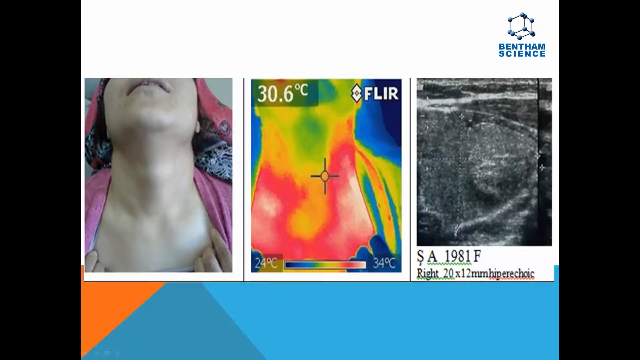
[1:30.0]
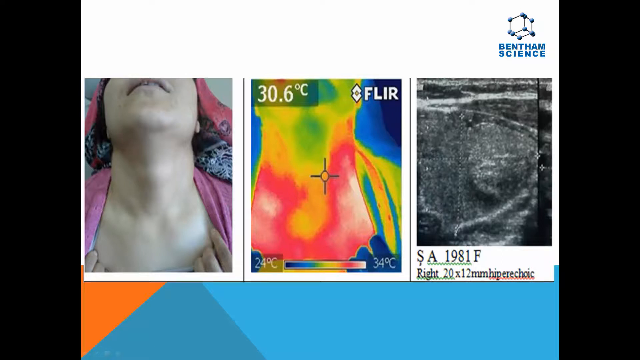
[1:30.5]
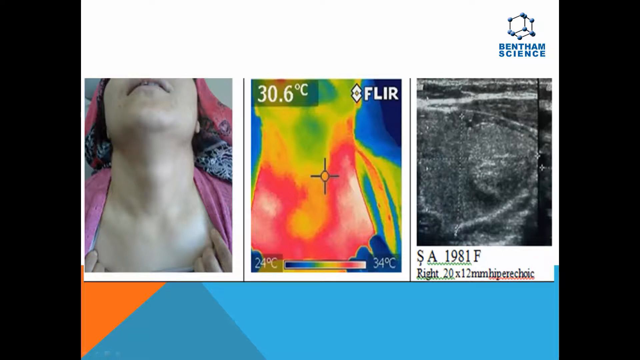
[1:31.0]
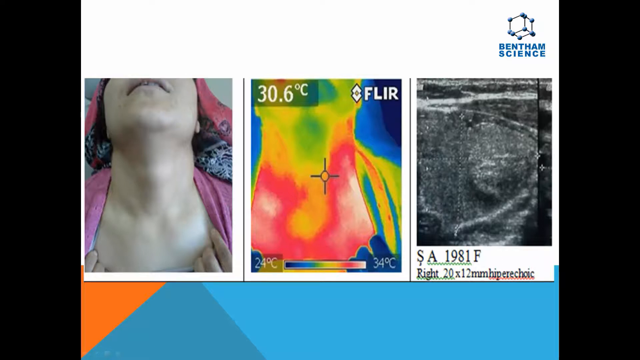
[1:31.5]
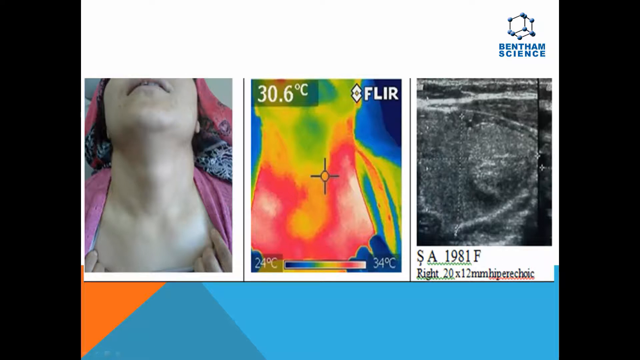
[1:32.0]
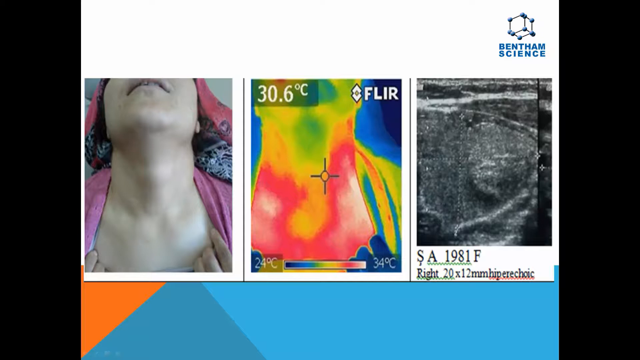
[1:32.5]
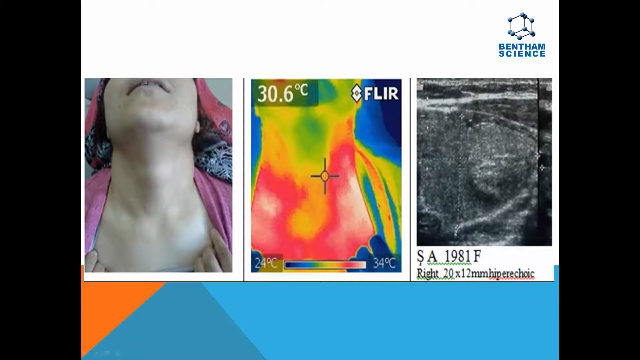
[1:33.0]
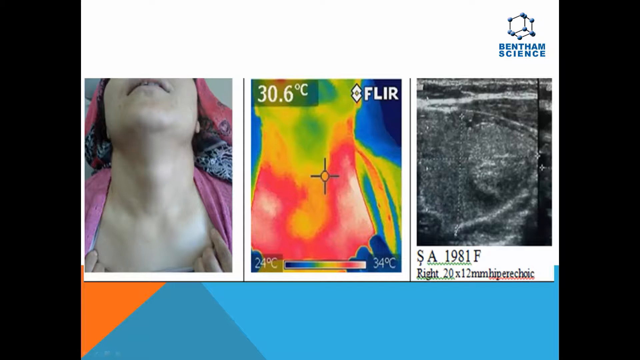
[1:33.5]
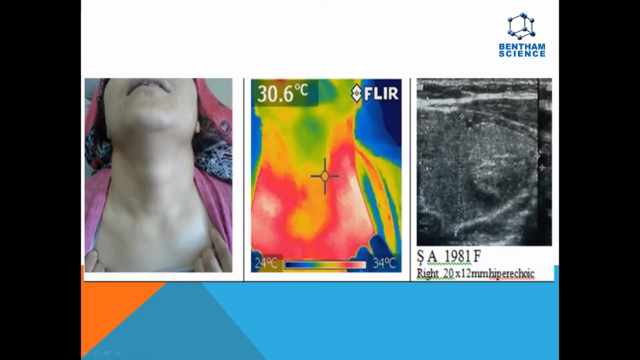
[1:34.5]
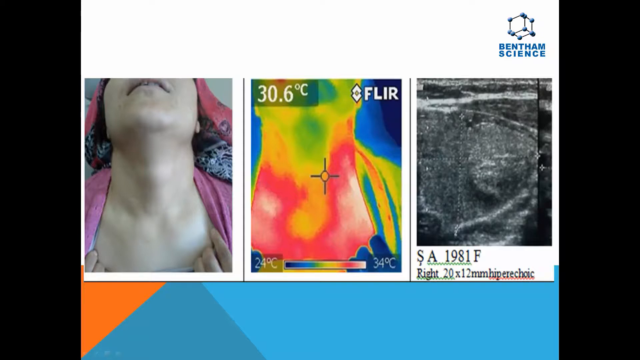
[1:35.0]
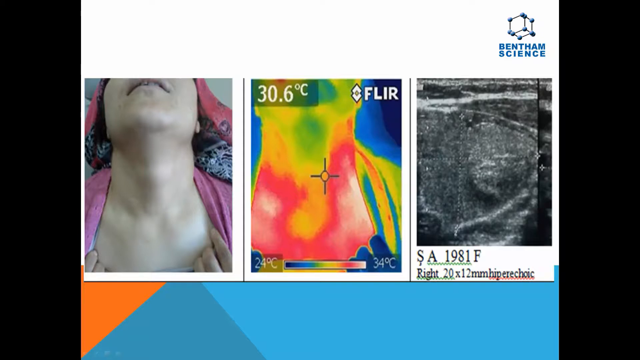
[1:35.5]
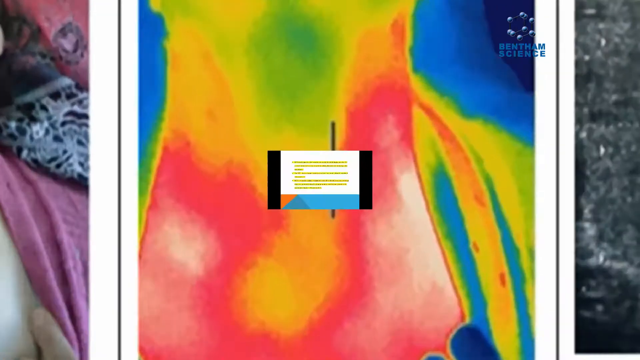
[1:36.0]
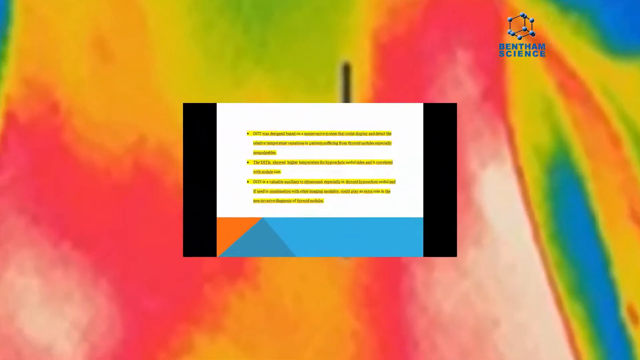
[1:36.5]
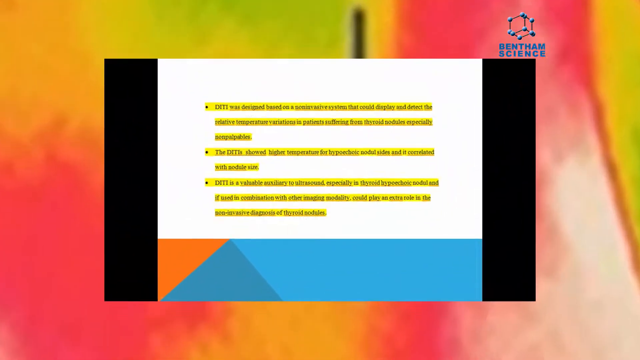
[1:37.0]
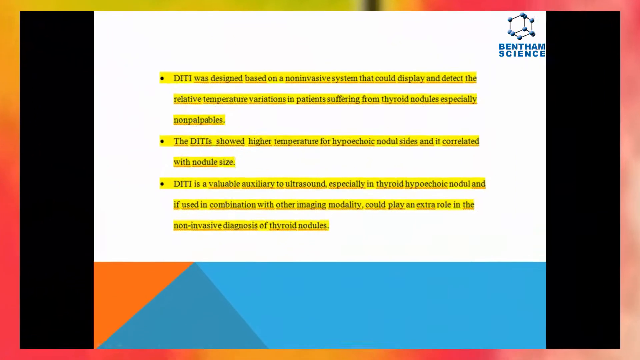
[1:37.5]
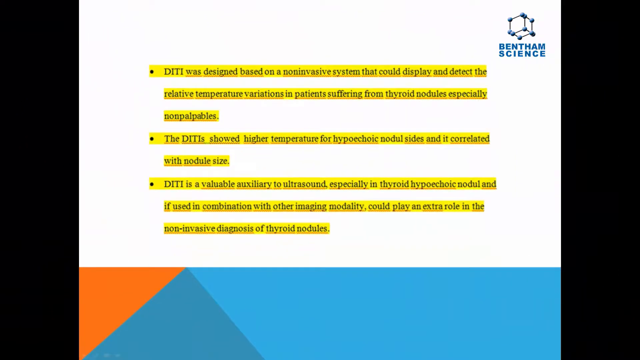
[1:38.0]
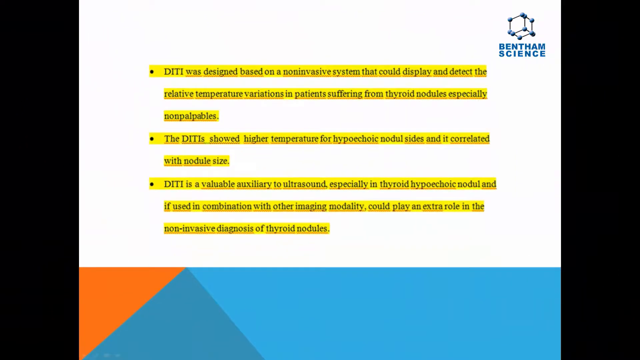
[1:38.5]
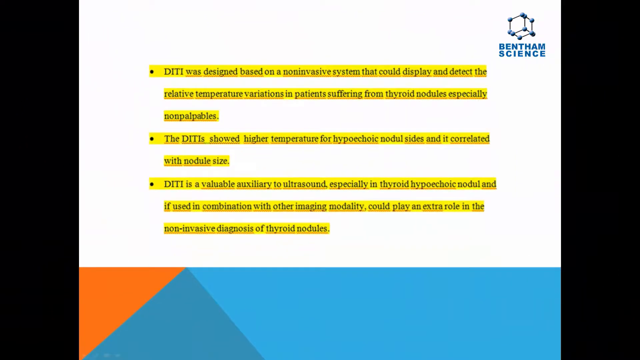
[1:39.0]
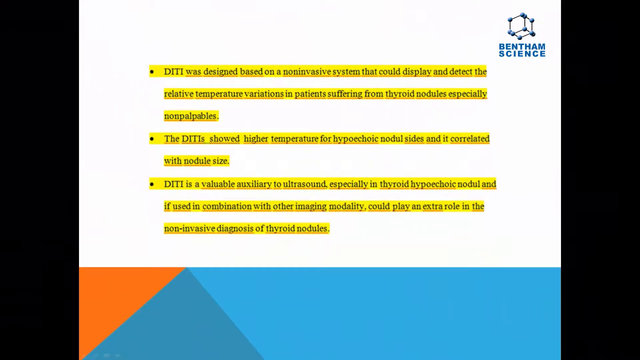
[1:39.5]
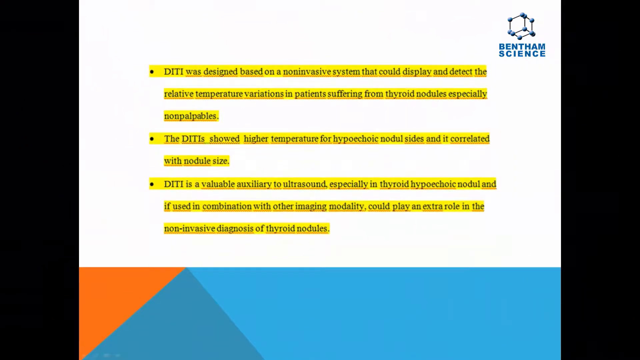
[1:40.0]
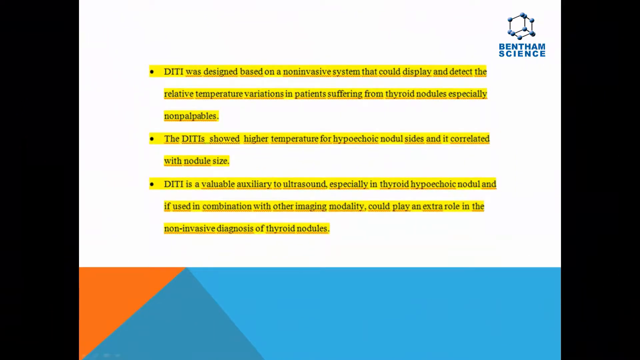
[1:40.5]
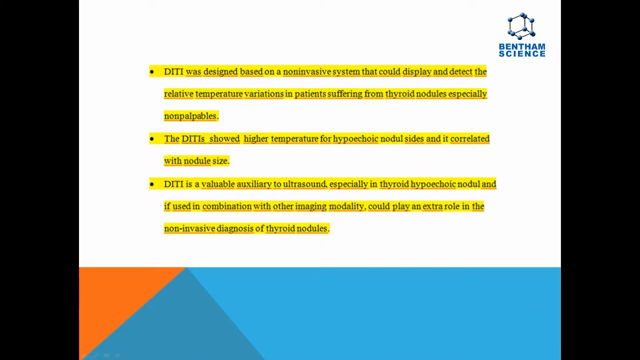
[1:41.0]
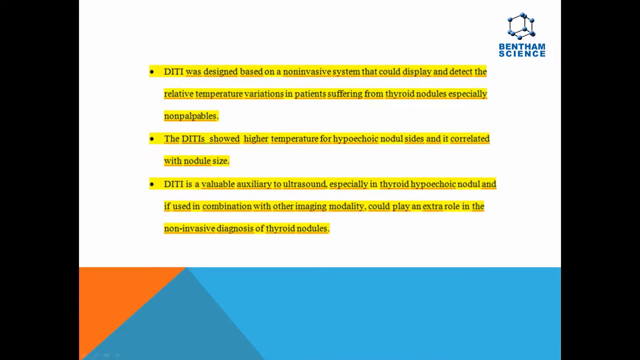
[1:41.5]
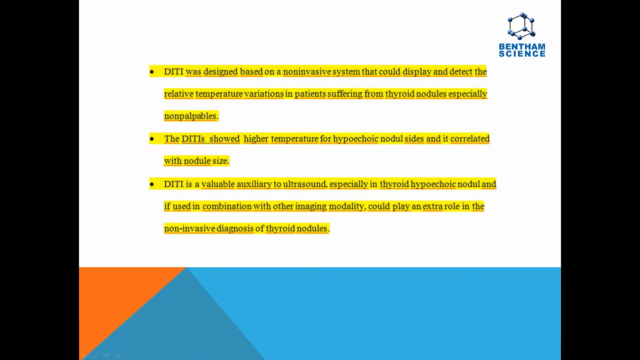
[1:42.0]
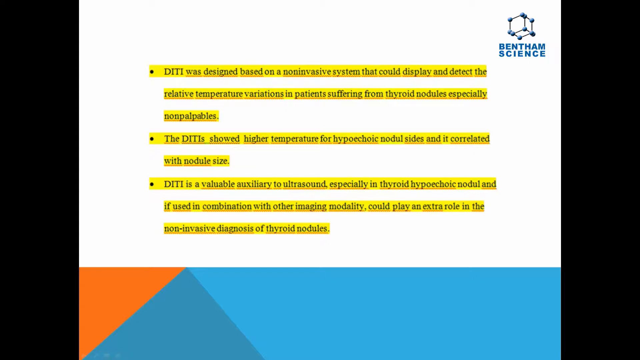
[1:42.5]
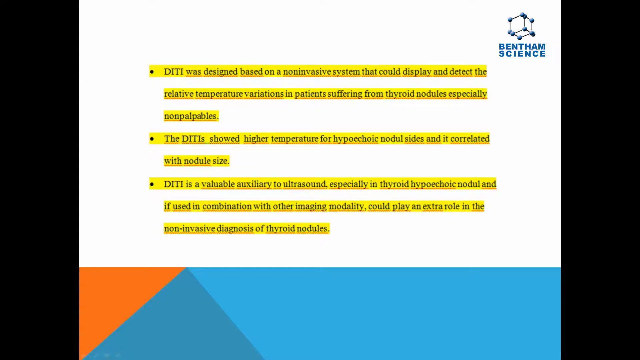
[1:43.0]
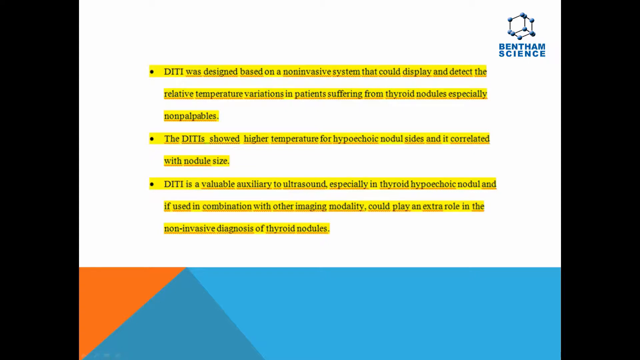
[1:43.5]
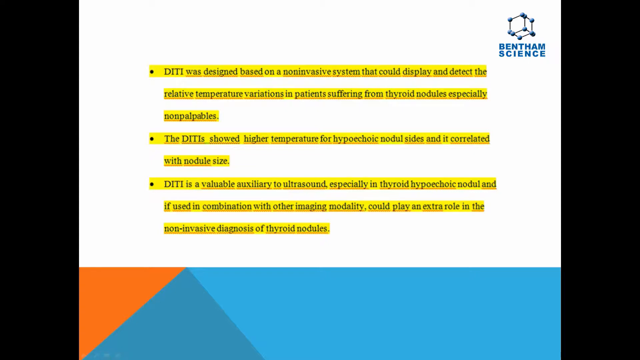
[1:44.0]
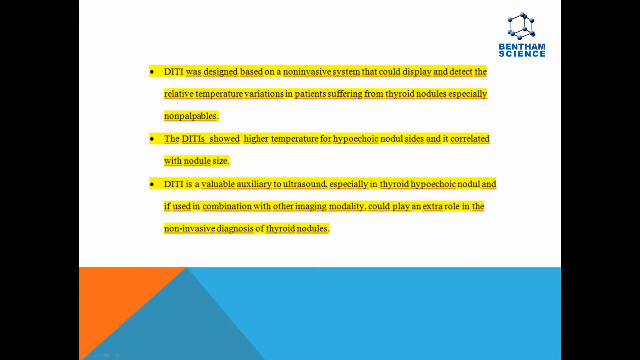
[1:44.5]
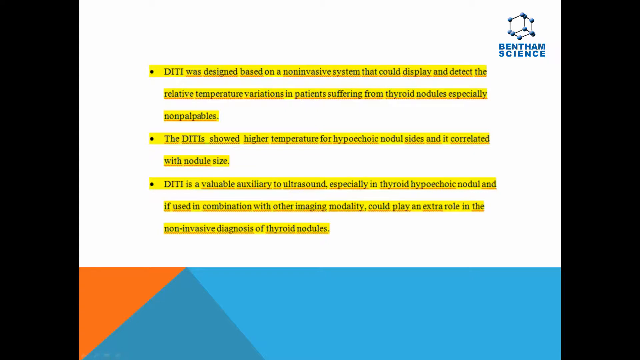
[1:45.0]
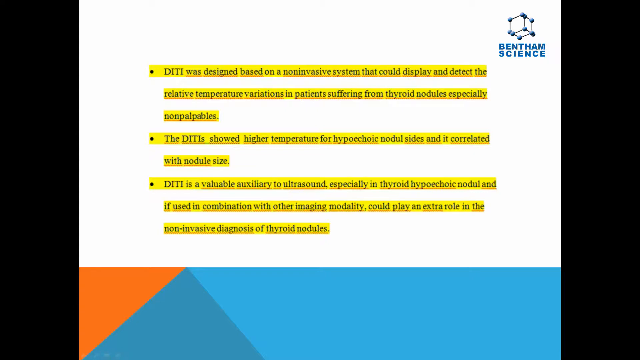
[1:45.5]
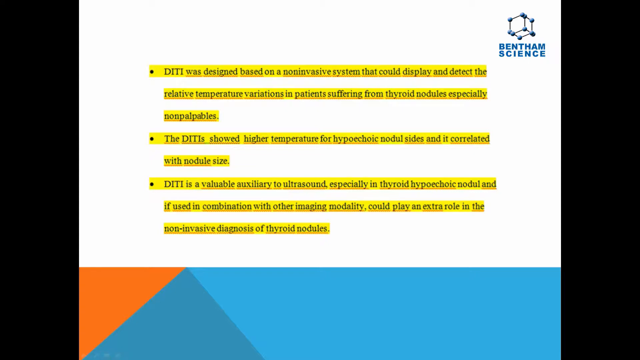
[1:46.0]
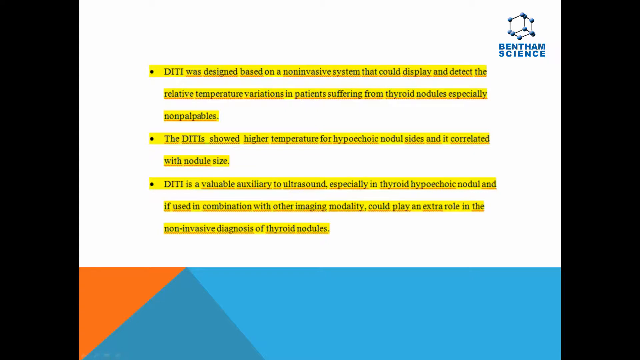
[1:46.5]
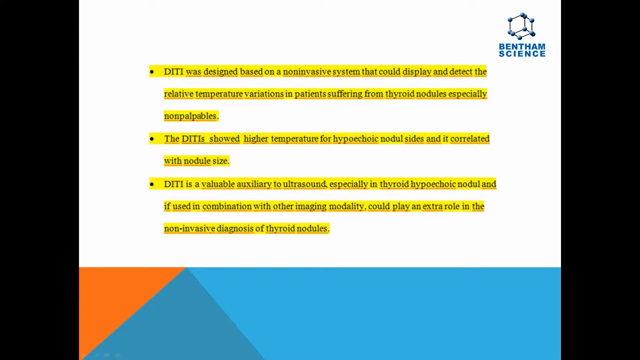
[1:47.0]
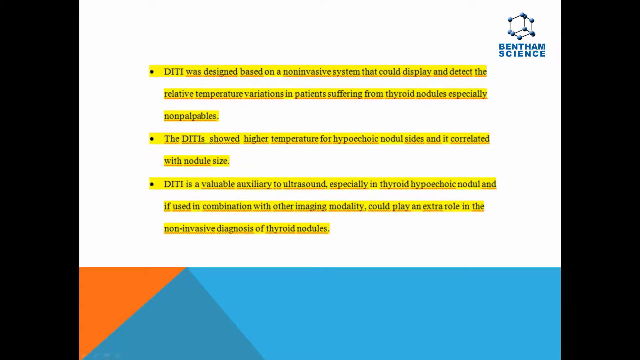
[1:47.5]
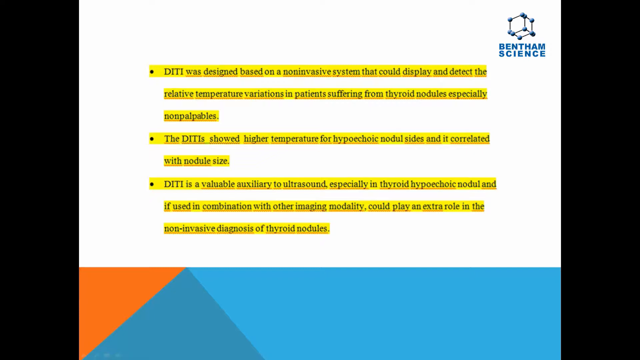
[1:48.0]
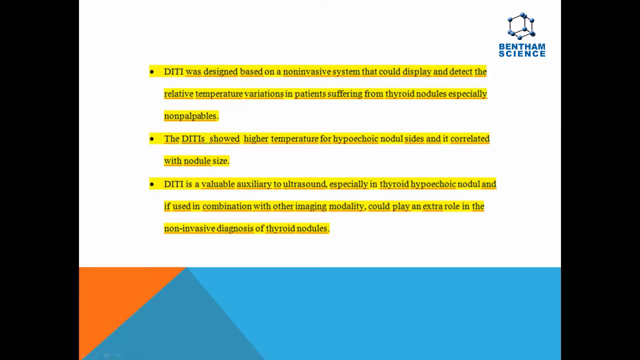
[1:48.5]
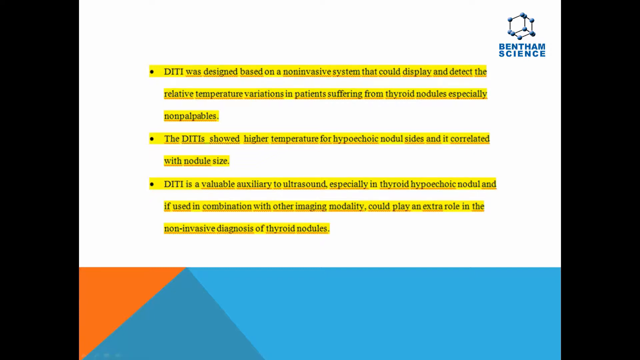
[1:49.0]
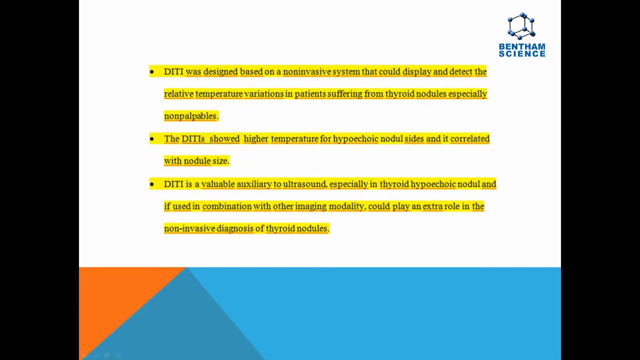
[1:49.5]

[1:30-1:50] A series of pictures of a woman appears to show her neck being photographed. On the left side of the screen she is seen from the lips down to her upper chest, wearing a pink shirt and holding it open with the tips of her fingers, which are visible in the photo. She seems to be covering her eyes with a red scarf. To the right is an infrared version of the left picture: her neck is red and orangish with bits of yellow, and the clothing around her is a mixture of blue and yellow. To the right of that is what looks like a grainy black and white sonogram of the two previous pictures. The pictures are on a white background, with the words "Bentham Science" in the top right and a 3D cube drawing above them, and at the bottom a long blue triangle with bits of orange on its left side. The video then moves away and zooms into a different slide with the same triangle, white background and Bentham Science icon in the top right, containing text highlighted in yellow in bullet points: "DITI was designed based on a non-invasive system that could display and detect the relative temperature variations in patients suffering from thyroid nodules, especially non-palpables." A bullet reads "The DITI showed higher temperatures for" nodule size "and it correlated with nodule size." The third bullet point reads "DITI is a valuable auxiliary to ultrasound, especially in thyroid hypoechoic nodule. If used in combination with other imaging modality, it could play an extra role in the non-invasive diagnosis of thyroid nodules." The slide stays on screen for some time.